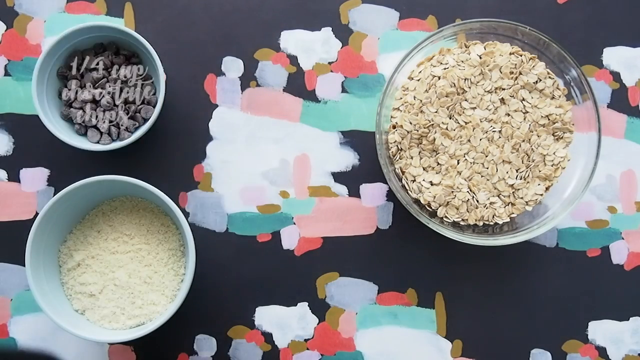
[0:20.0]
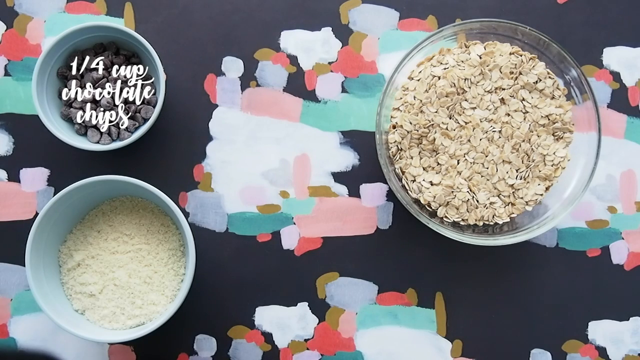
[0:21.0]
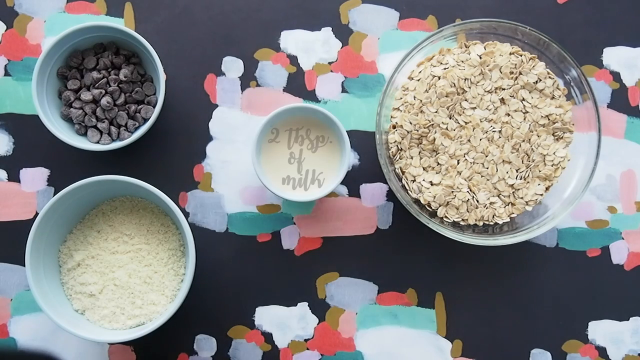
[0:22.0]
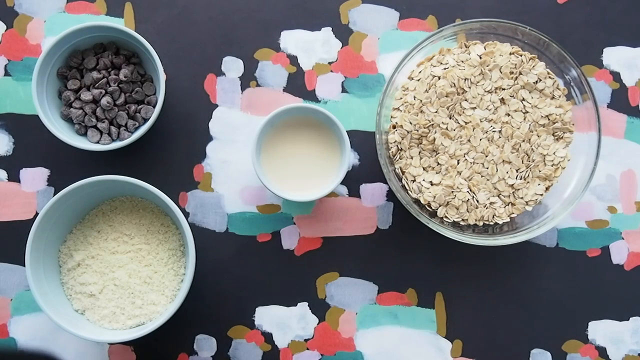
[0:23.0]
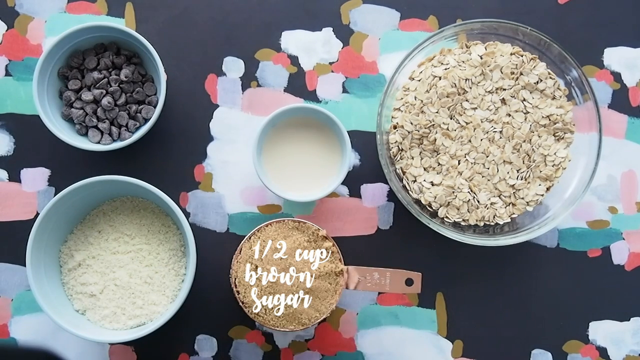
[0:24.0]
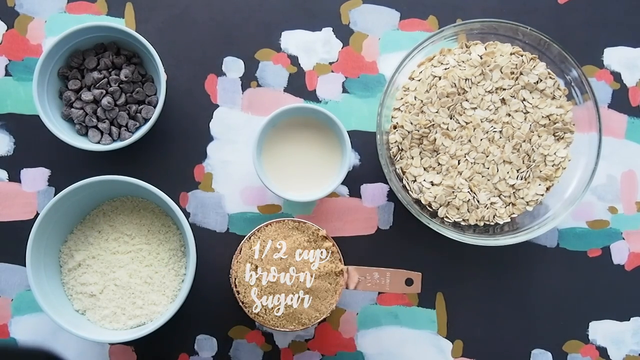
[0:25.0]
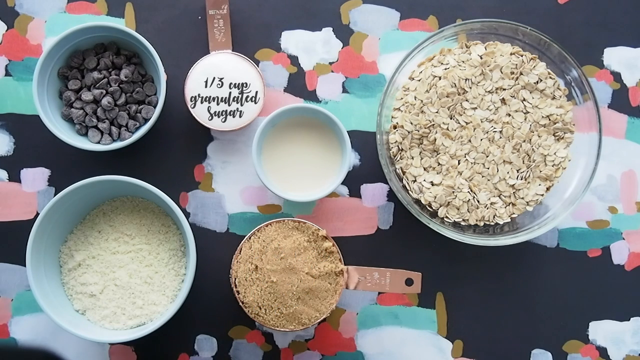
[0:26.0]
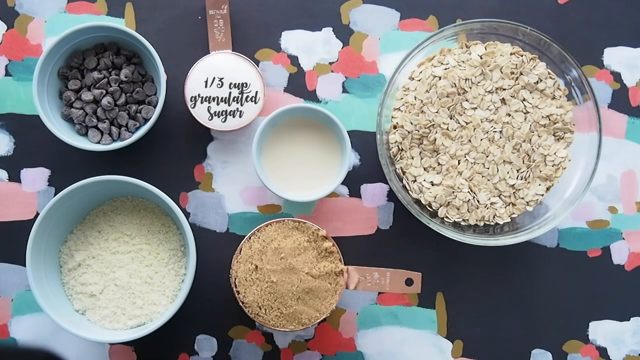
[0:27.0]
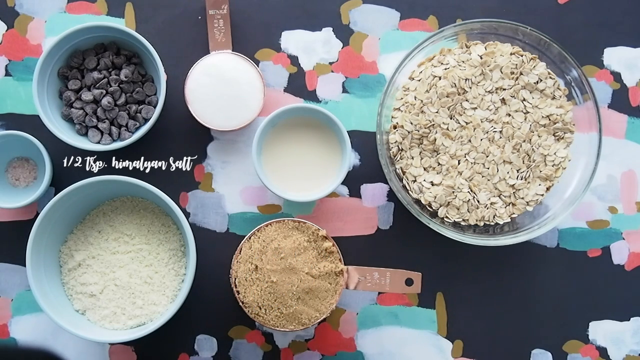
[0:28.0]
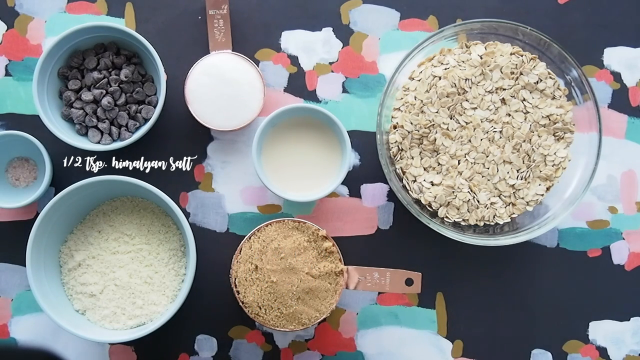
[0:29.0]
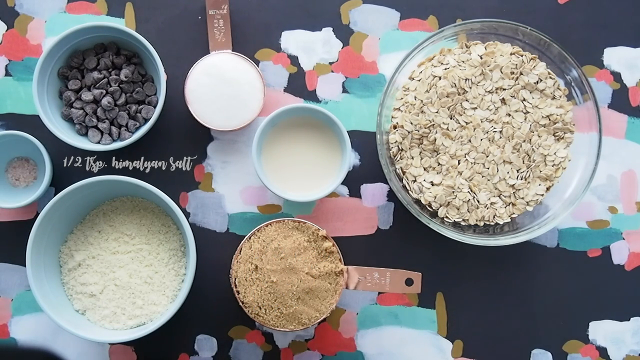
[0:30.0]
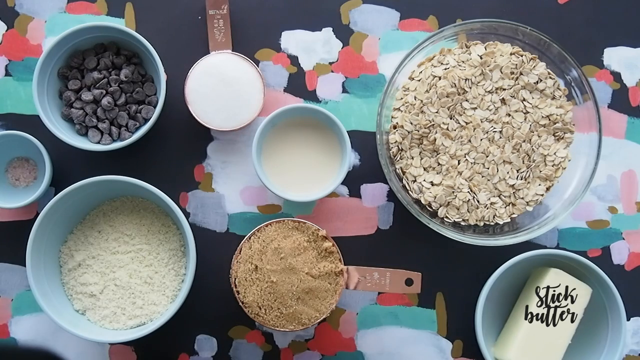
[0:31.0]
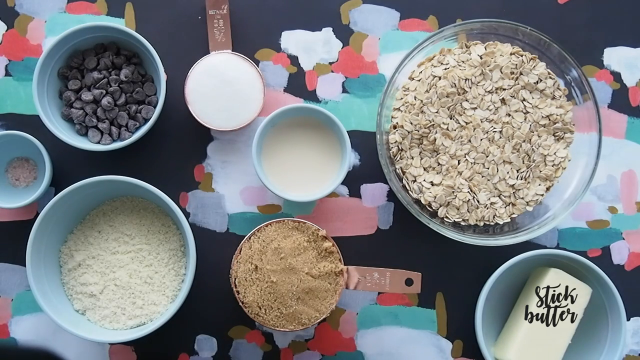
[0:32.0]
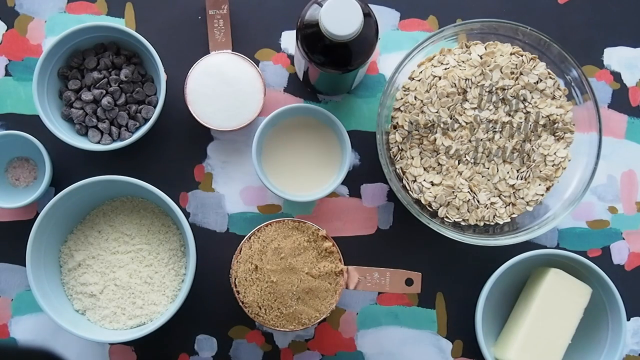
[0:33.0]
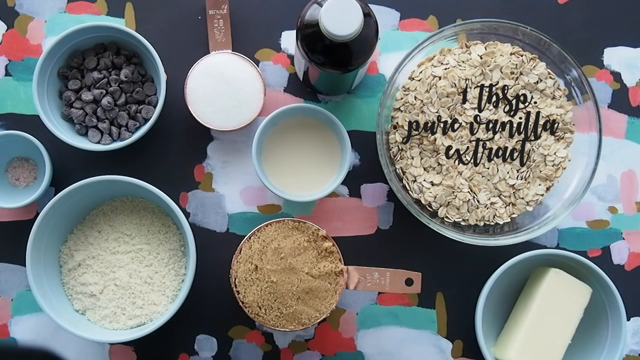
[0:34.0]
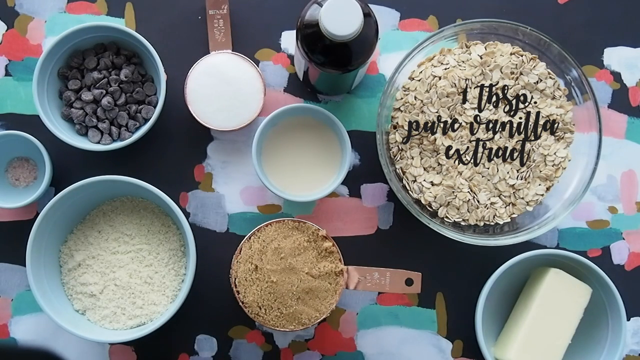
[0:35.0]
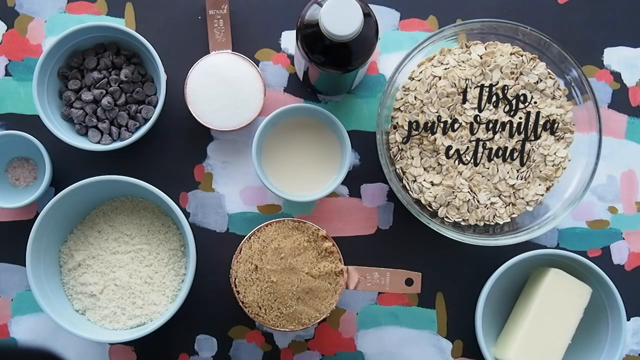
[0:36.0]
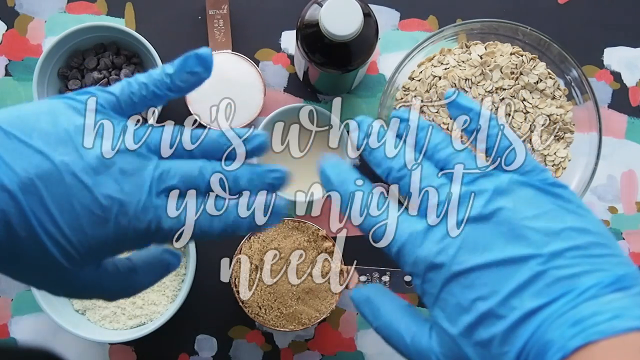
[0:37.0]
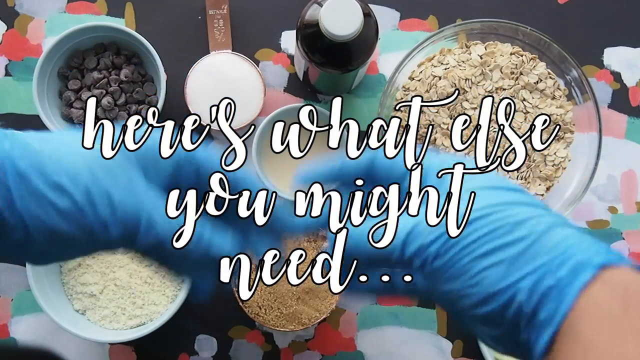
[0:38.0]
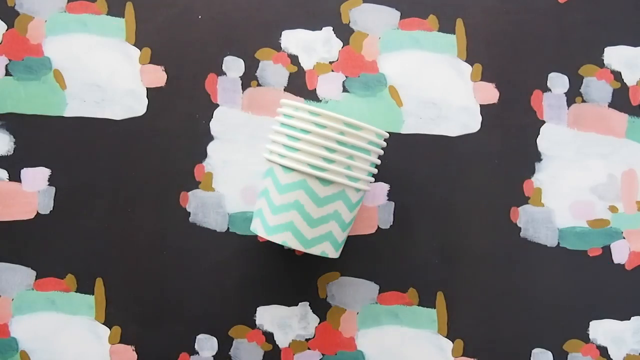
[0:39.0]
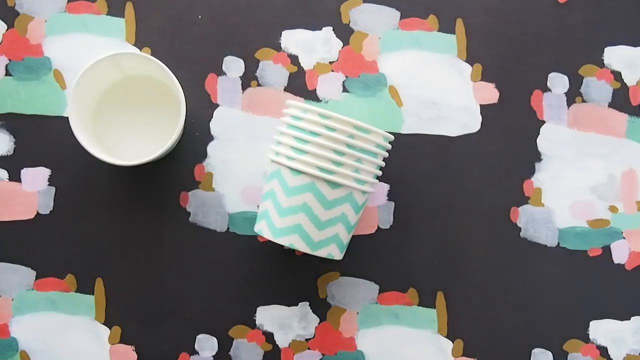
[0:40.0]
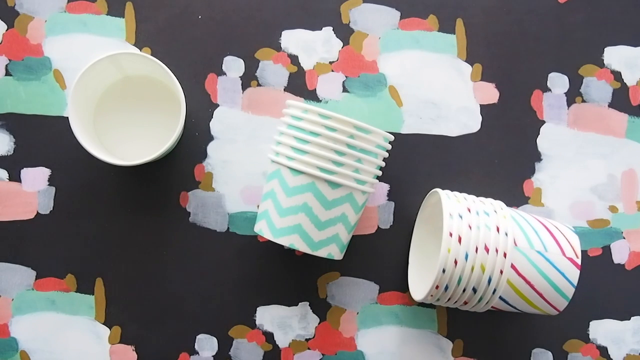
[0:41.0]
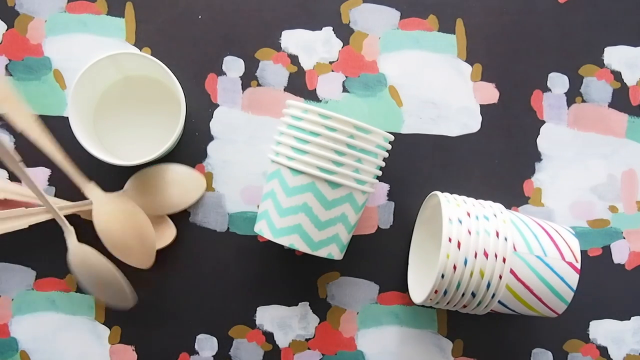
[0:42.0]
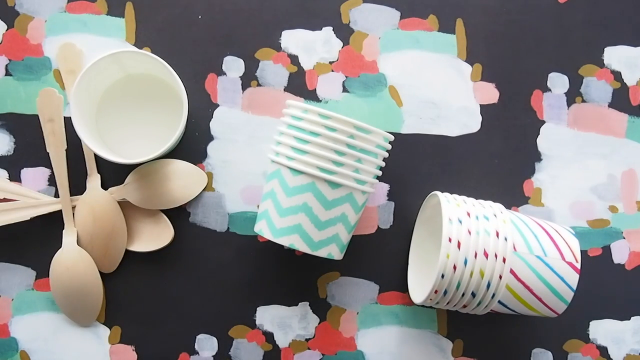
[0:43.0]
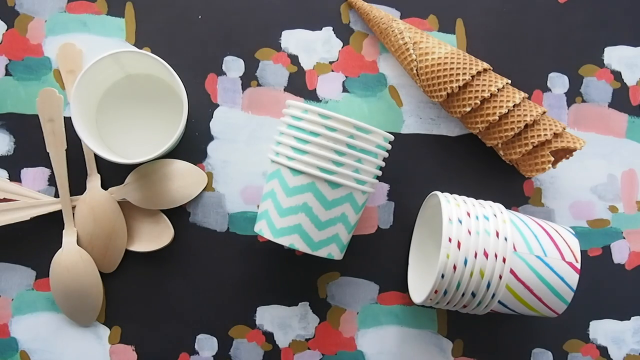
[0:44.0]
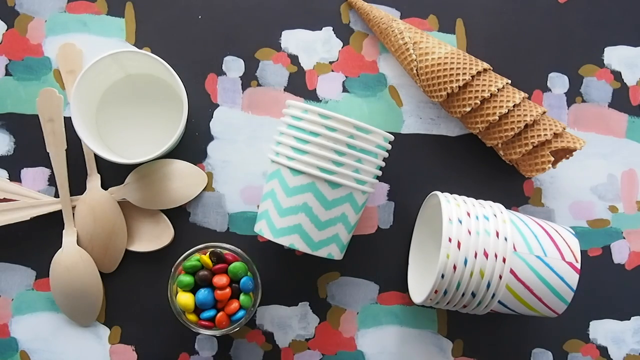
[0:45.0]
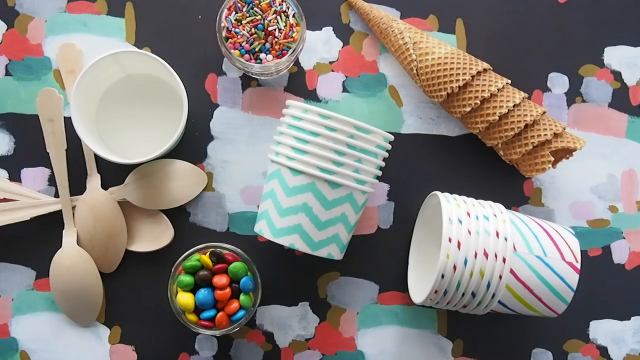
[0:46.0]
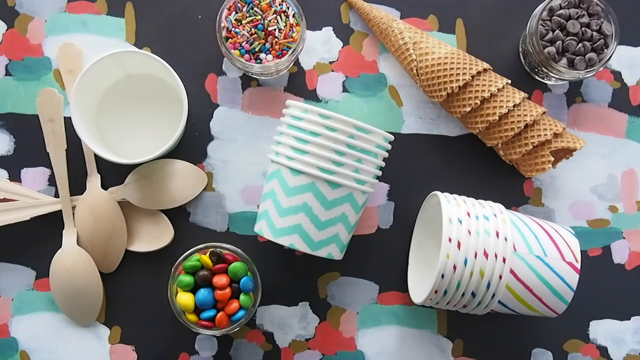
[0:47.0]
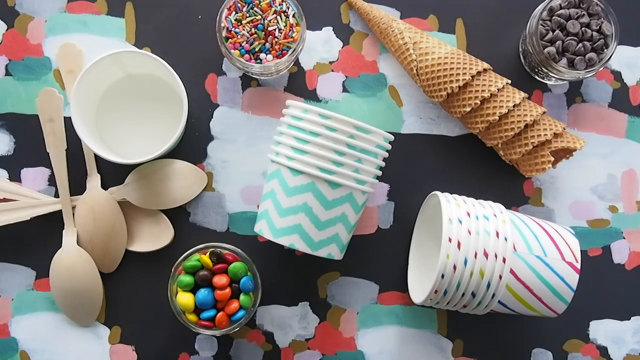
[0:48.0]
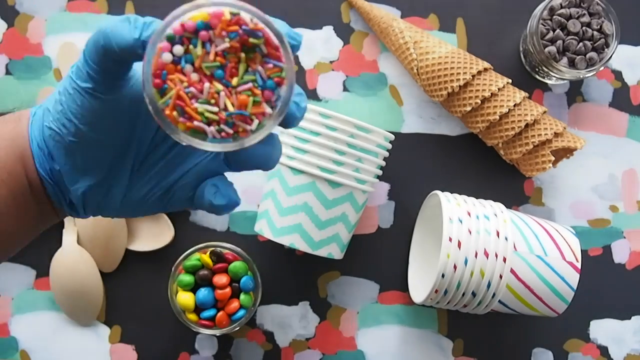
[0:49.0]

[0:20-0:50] The recipe continues with a quarter cup of chocolate chips, with the chips and water in a cup visible. Two tablespoons of milk are shown in a small cup, half a cup of brown sugar in a half cup, a third cup of granulated sugar in a cup, half a tablespoon of salt, sticky butter in a cup, and one tablespoon of pure vanilla. Someone wearing blue gloves appears, along with "here is what else you might need": many plastic cups, plastic spoons, cones, treats and sprinkles. The man picks up the sprinkles in a bowl and shows them to the camera.